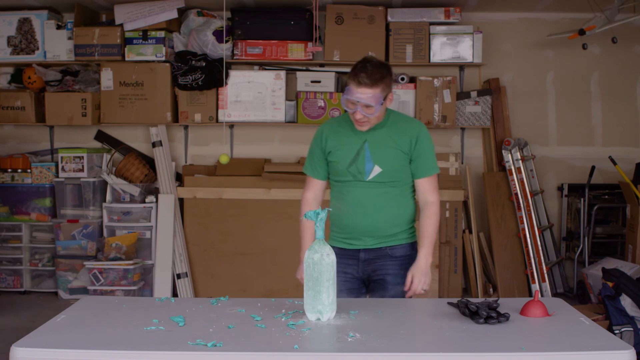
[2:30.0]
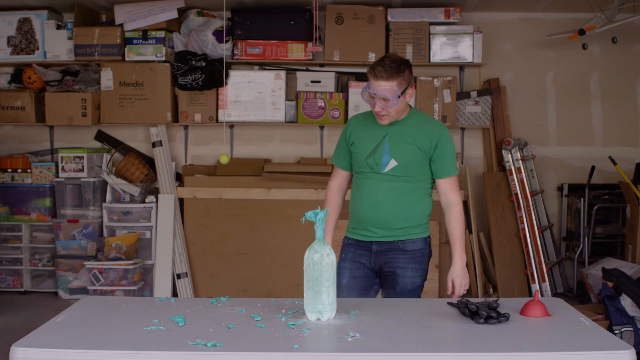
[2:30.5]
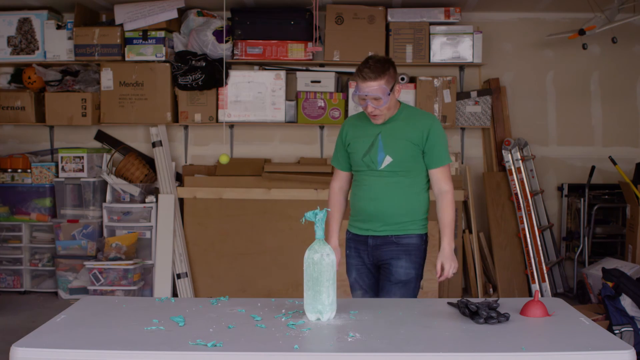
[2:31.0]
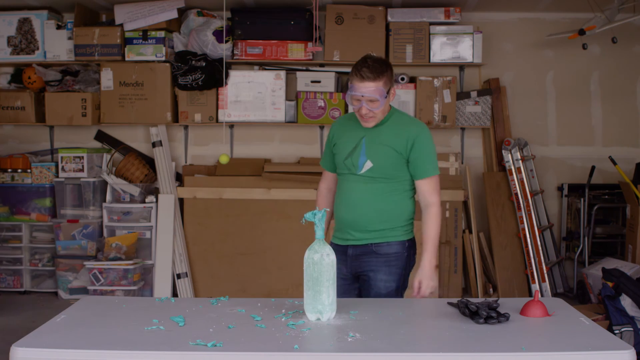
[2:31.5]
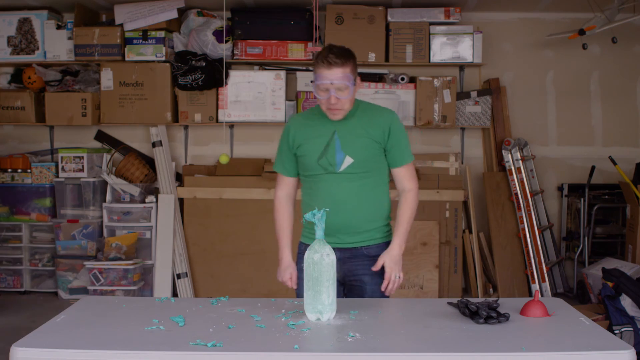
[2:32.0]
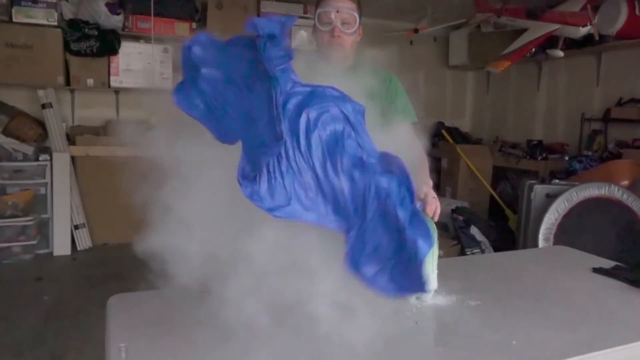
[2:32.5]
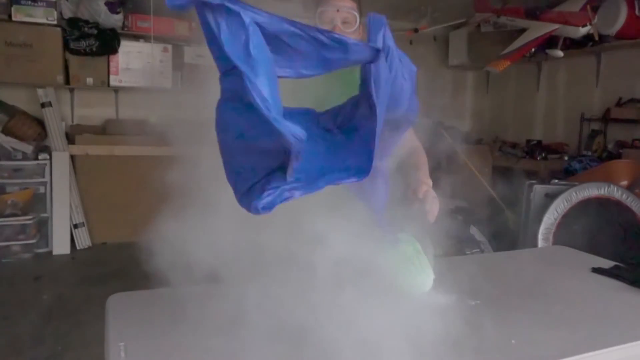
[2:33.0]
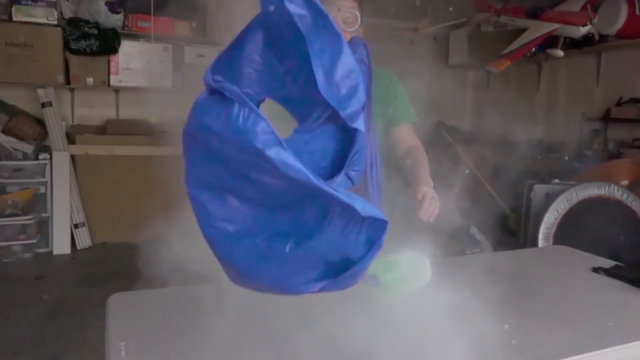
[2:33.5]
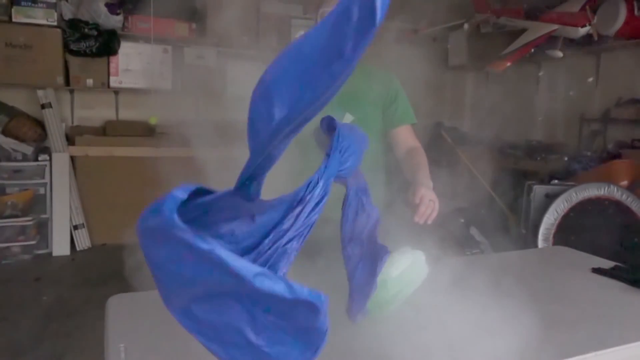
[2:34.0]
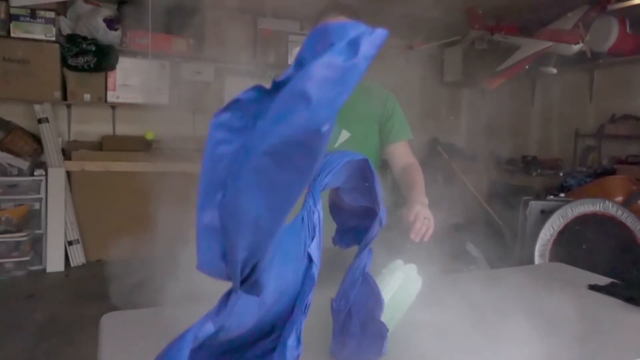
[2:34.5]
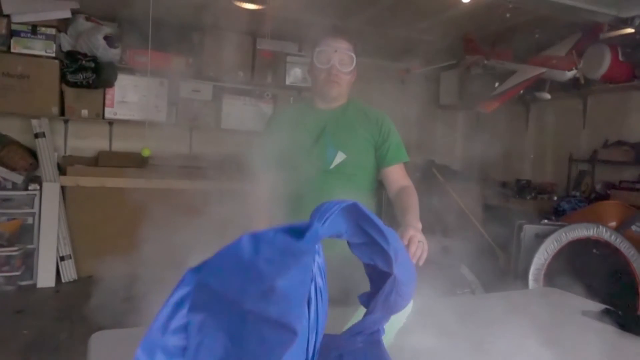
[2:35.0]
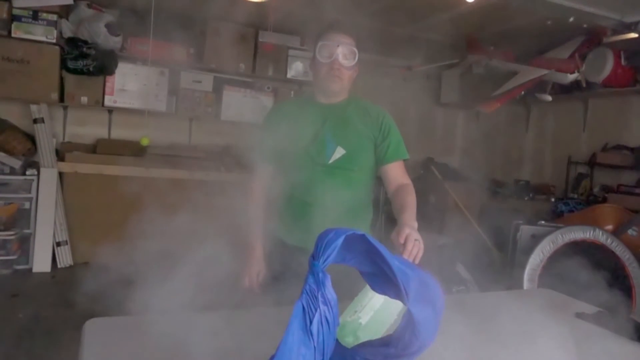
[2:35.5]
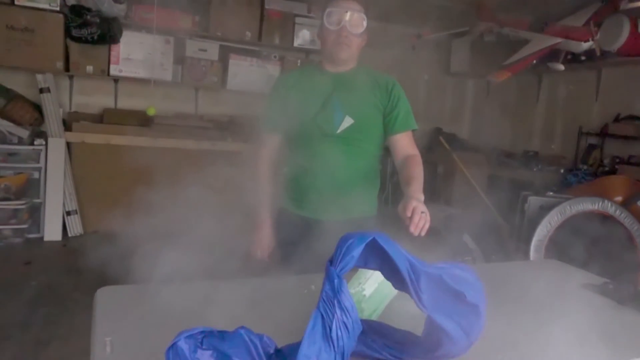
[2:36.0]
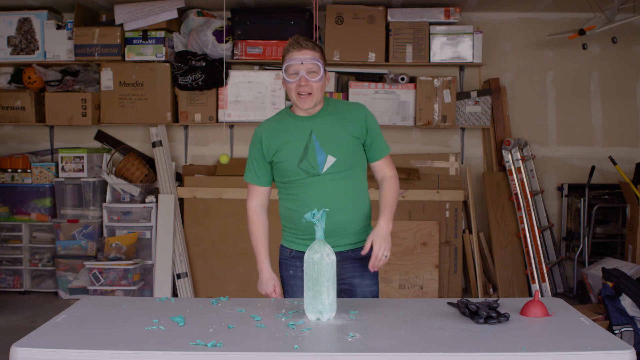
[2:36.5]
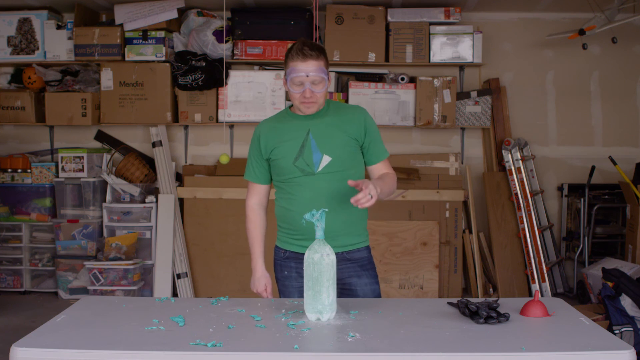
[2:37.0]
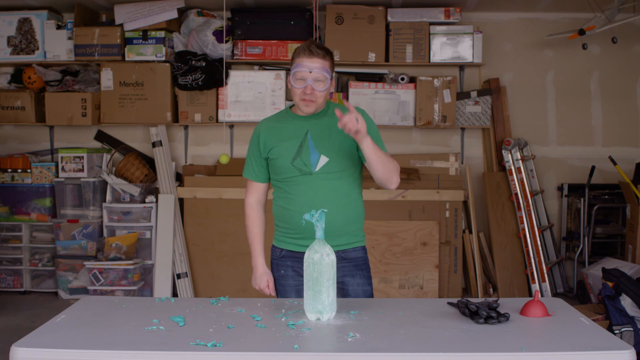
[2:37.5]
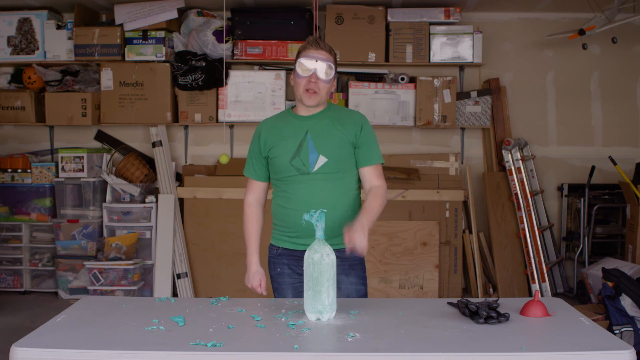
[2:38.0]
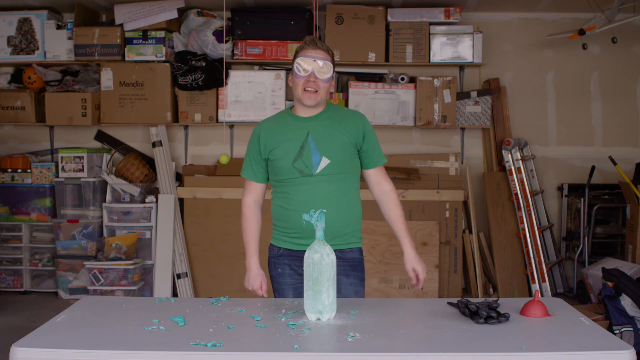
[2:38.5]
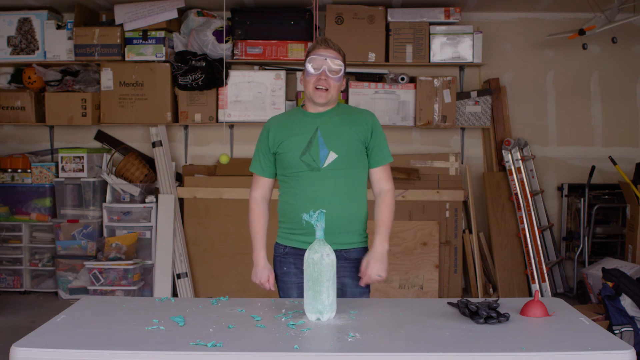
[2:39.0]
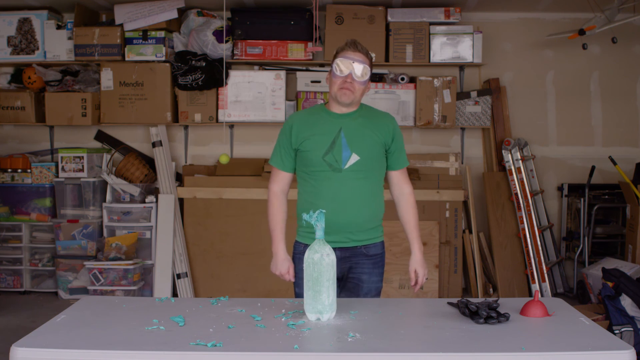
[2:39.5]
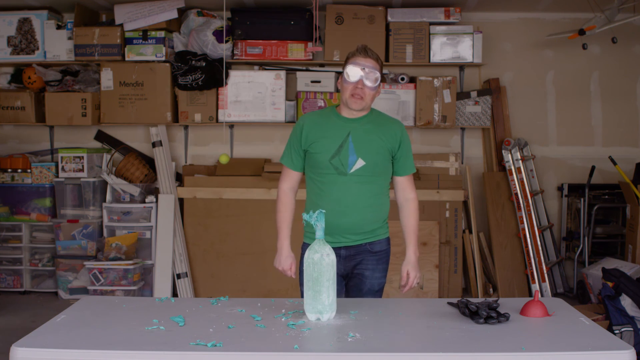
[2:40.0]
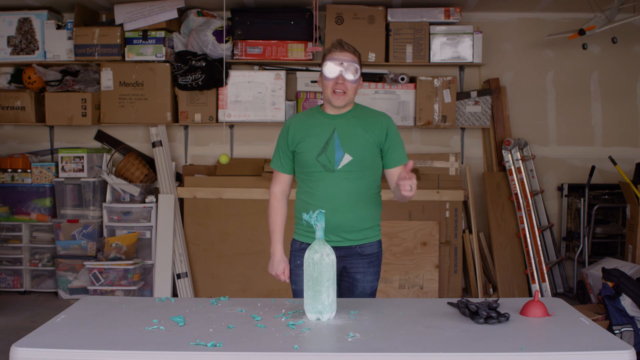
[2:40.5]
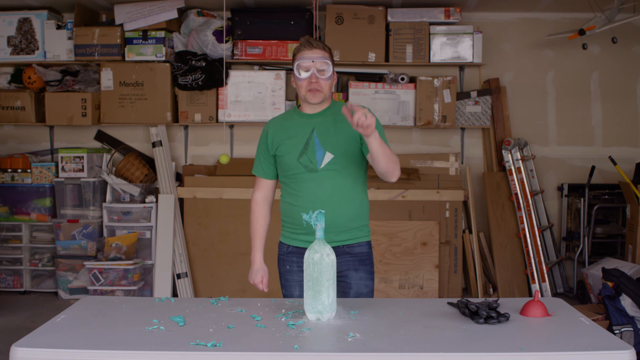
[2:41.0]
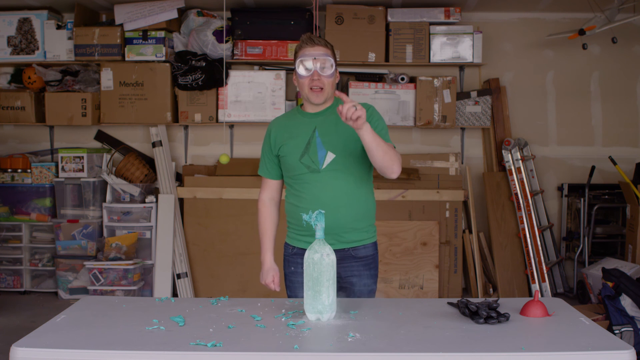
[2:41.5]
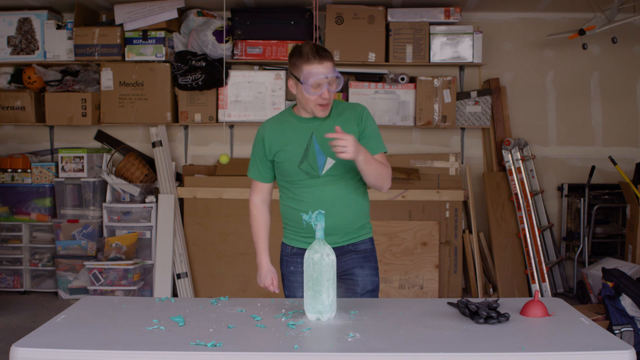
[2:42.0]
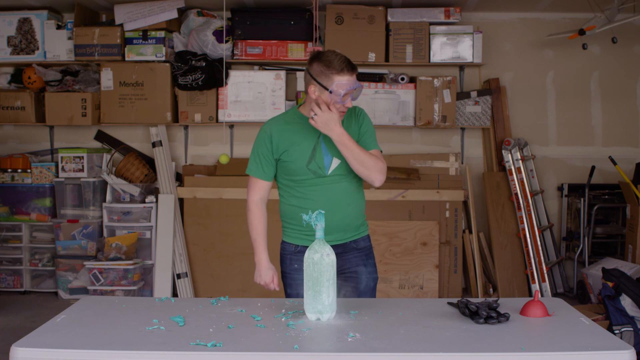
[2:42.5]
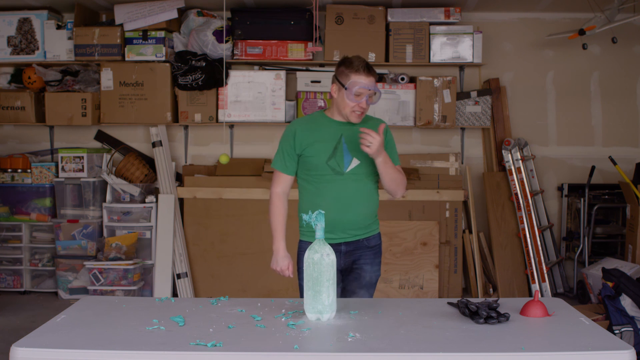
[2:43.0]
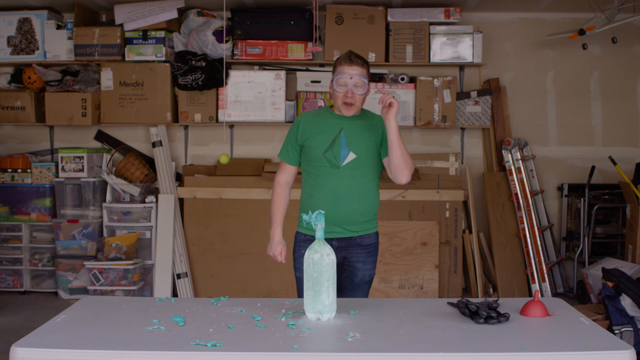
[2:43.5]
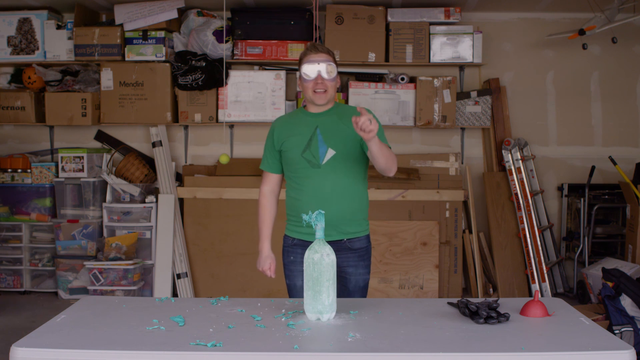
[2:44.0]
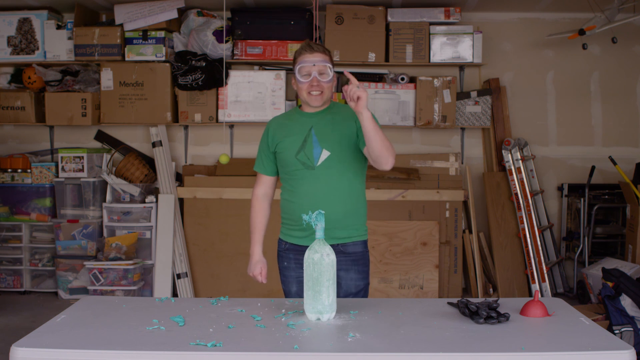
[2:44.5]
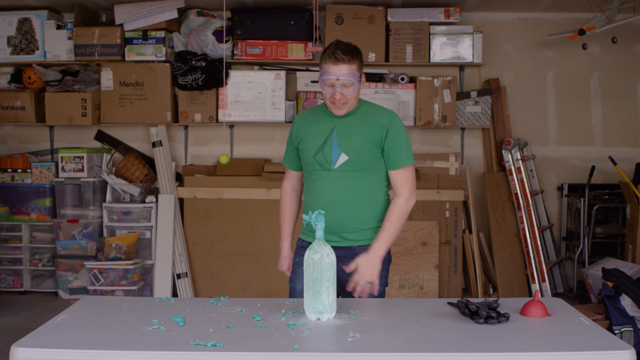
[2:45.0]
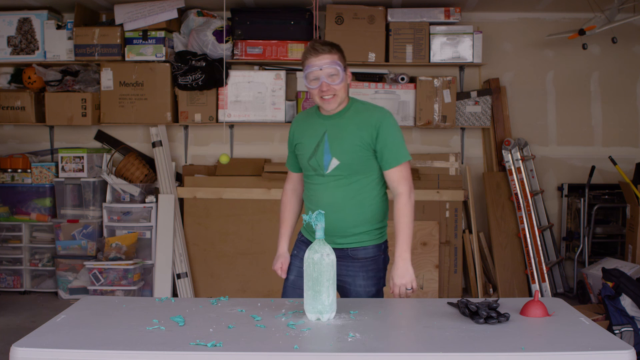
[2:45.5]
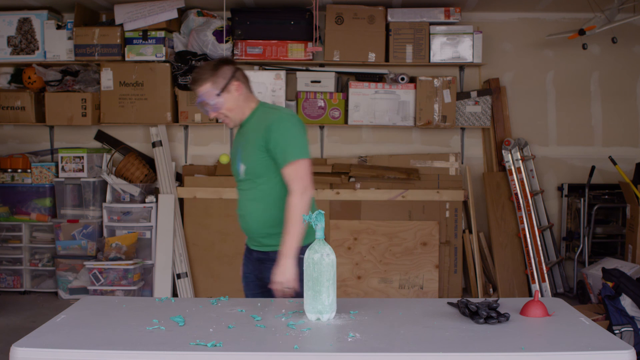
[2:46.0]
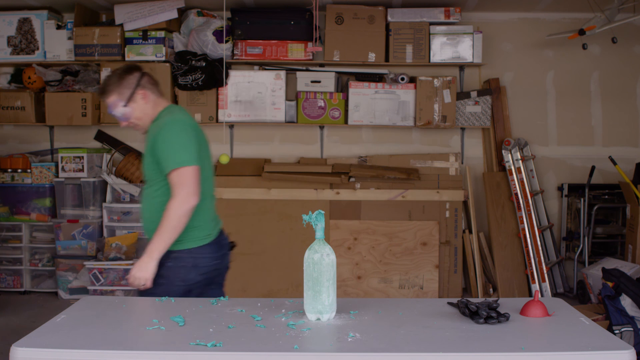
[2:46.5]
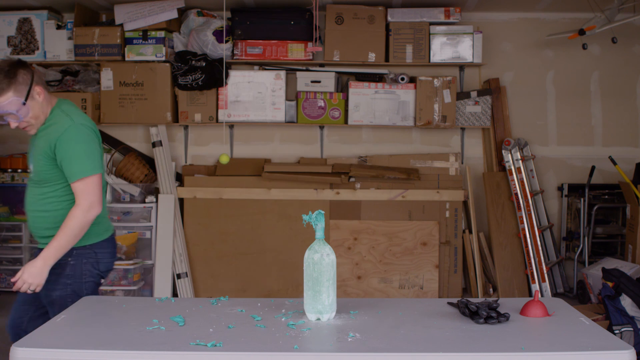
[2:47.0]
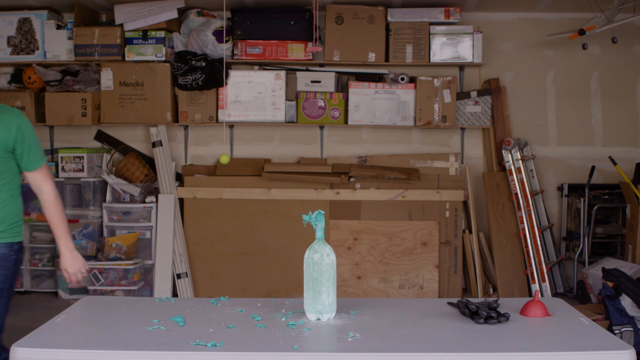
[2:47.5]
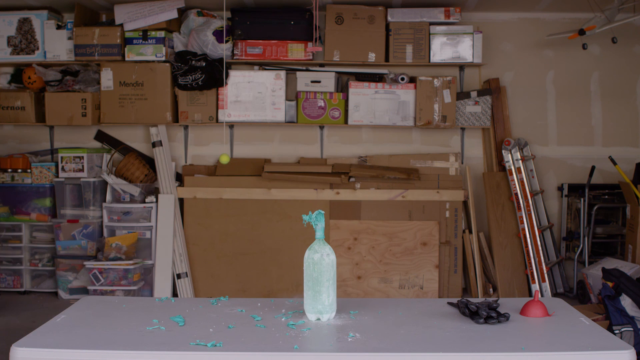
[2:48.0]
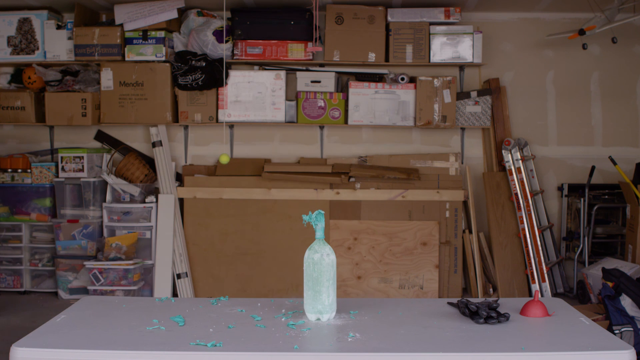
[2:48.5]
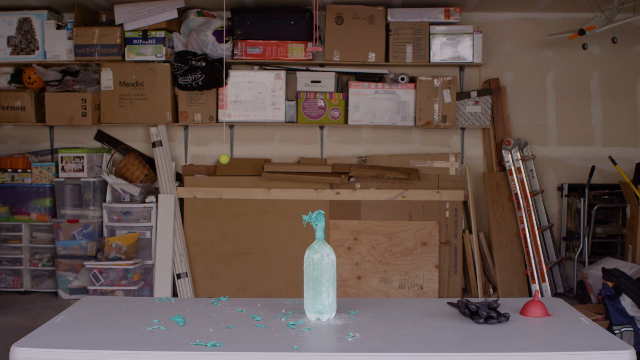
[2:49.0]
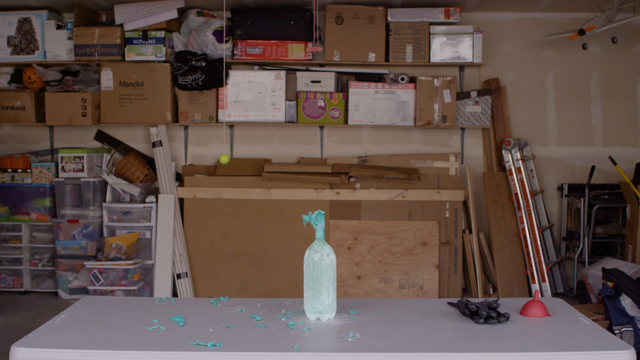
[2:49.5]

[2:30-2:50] An empty green bottle is on the table, and a blue balloon explodes. The man, who has a green tablet, wears goggles and points directly at the audience as a green balloon explodes. The green bottle lies flat on the table, and its size gets wider and wider as the experiment goes on, with a lot of material stained onto the bottle at the very bottom of the screen. In the background are many boxes in brown, white and various other colors.